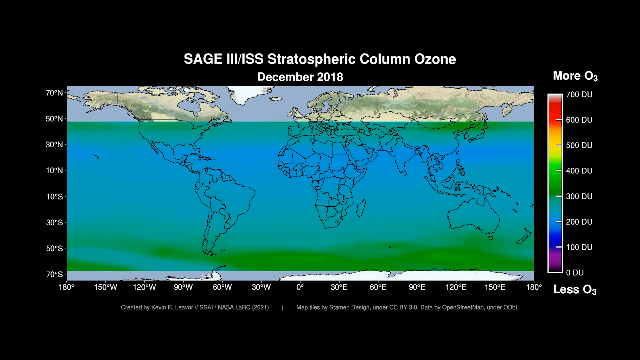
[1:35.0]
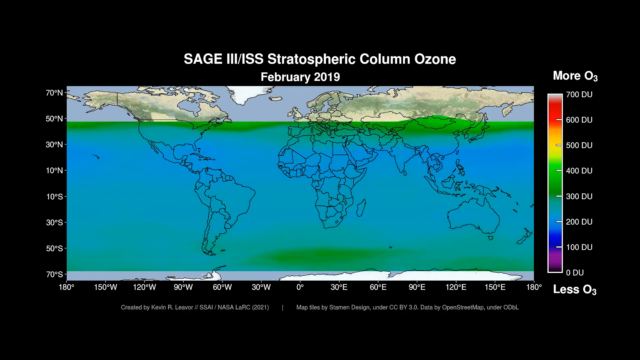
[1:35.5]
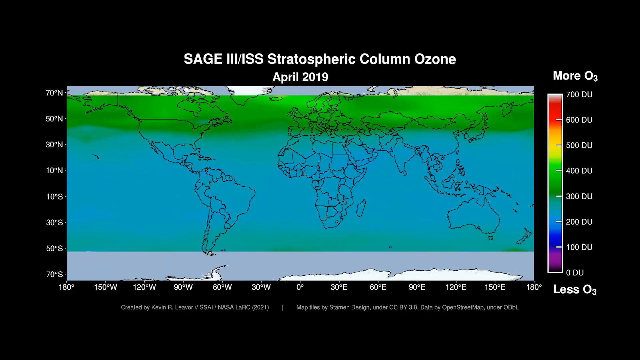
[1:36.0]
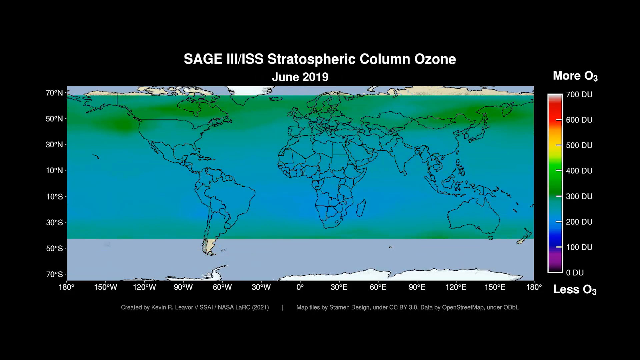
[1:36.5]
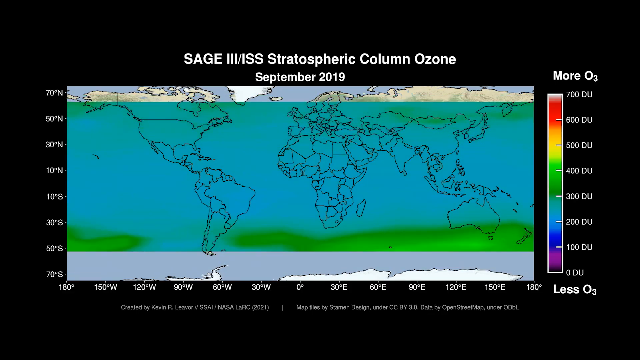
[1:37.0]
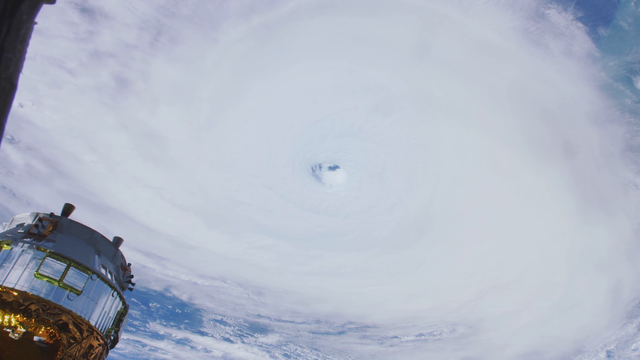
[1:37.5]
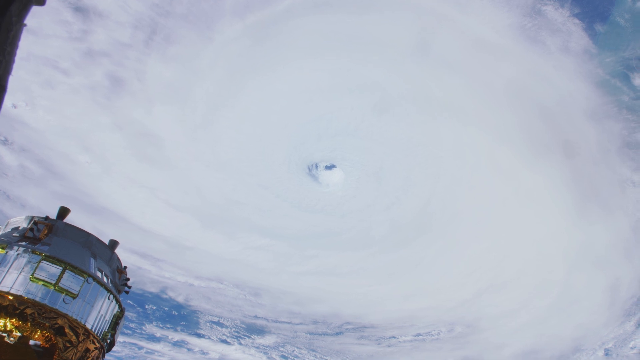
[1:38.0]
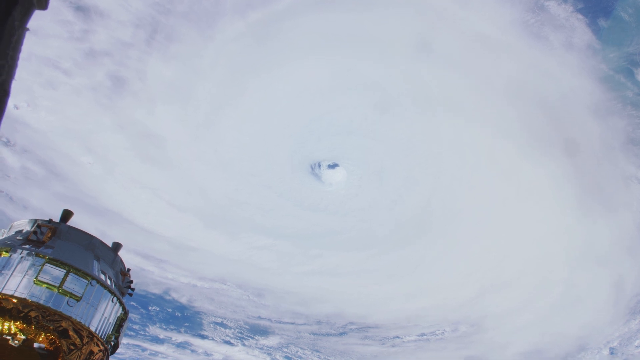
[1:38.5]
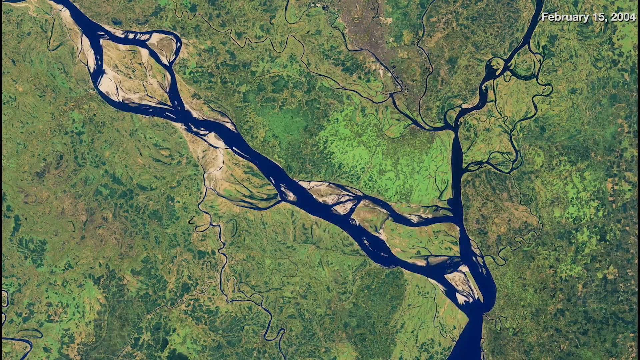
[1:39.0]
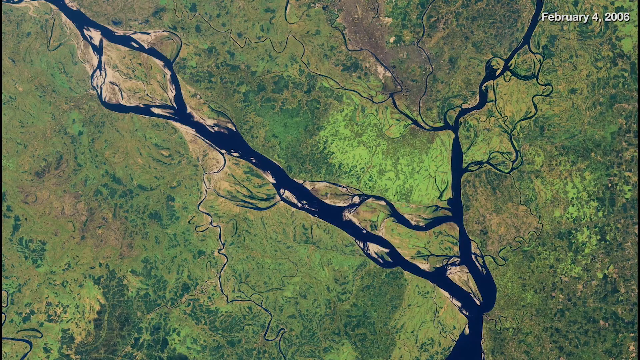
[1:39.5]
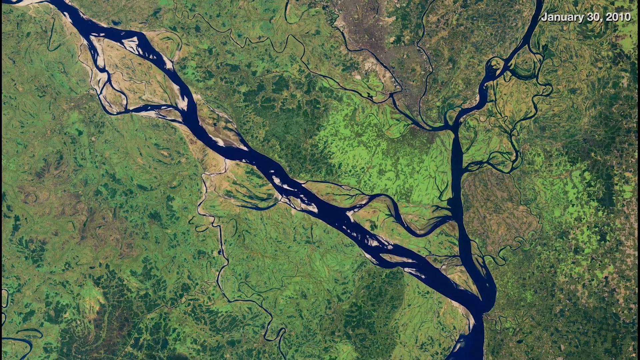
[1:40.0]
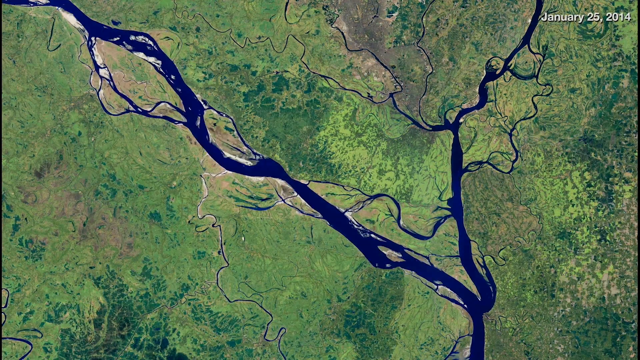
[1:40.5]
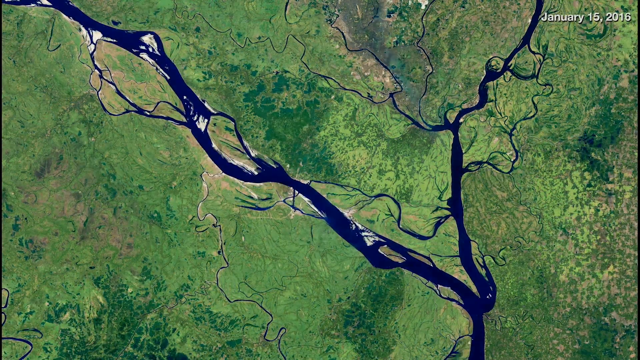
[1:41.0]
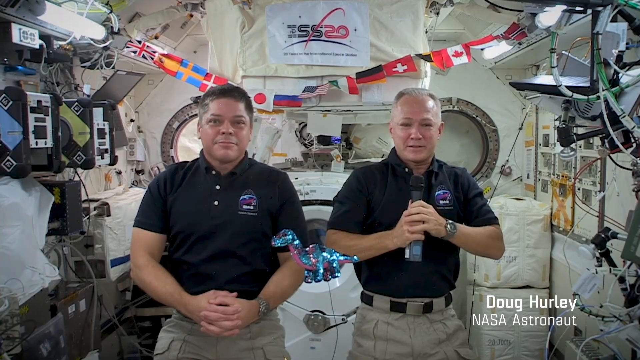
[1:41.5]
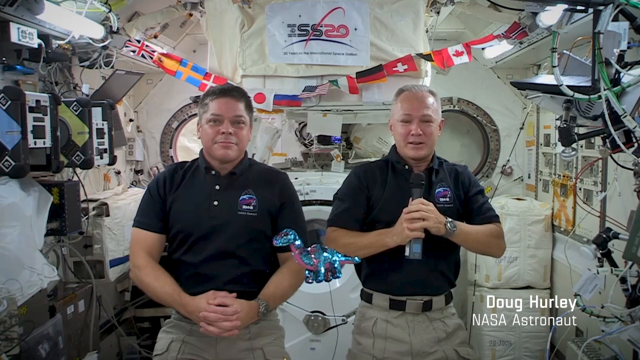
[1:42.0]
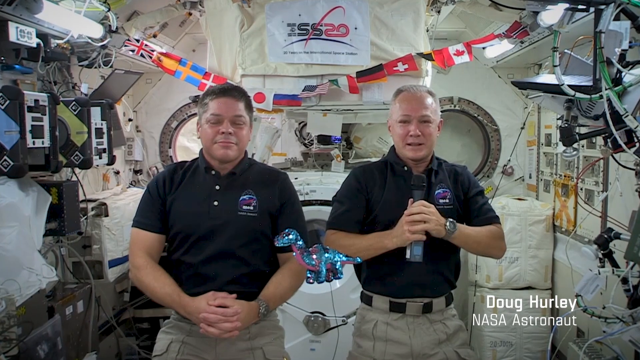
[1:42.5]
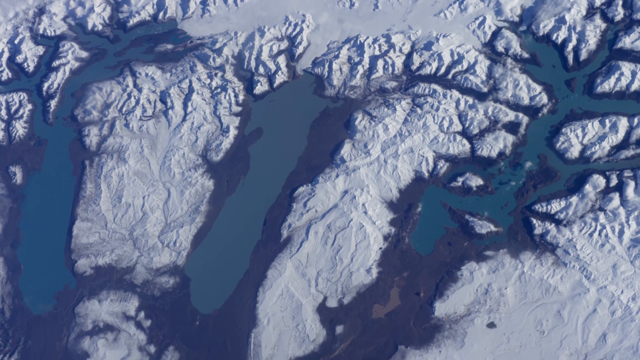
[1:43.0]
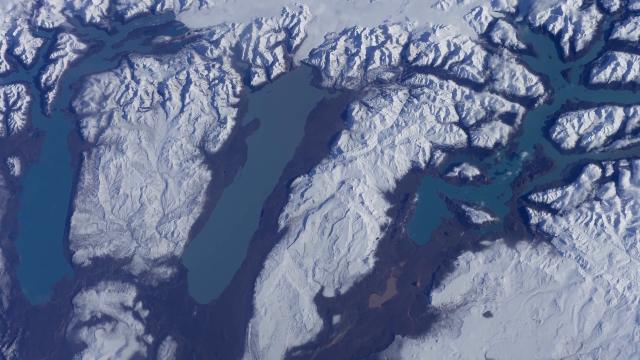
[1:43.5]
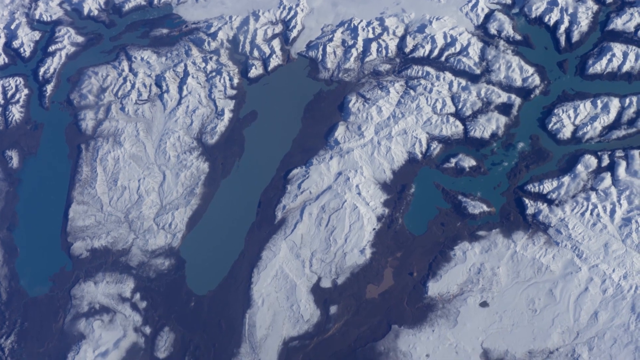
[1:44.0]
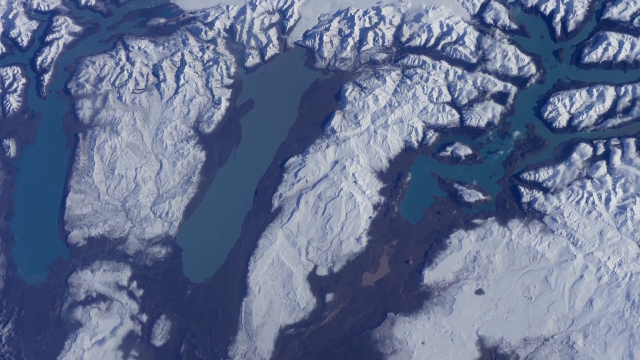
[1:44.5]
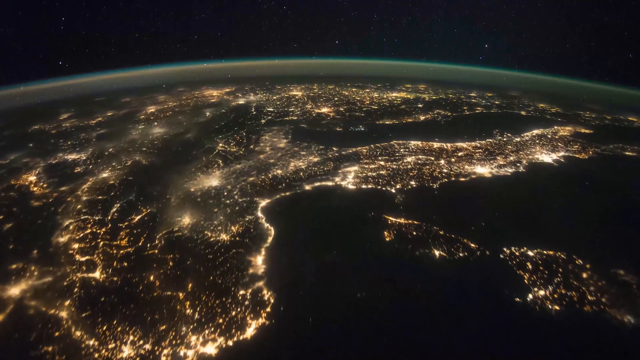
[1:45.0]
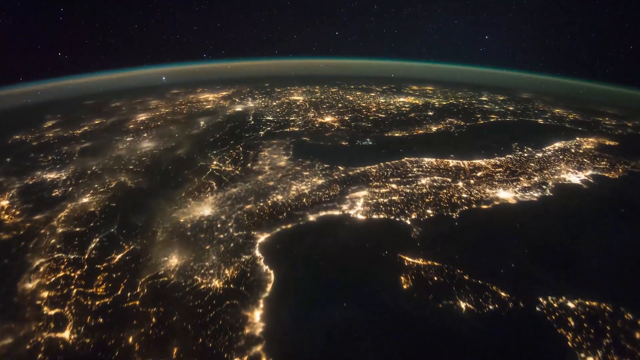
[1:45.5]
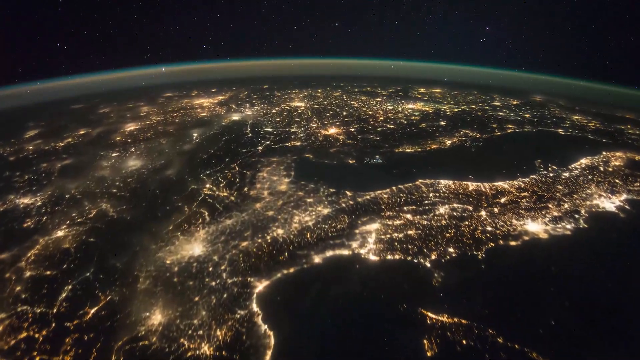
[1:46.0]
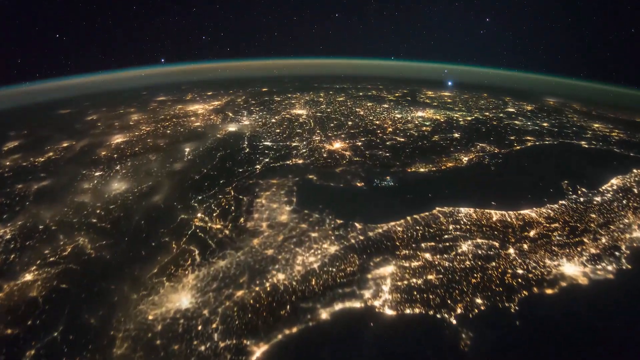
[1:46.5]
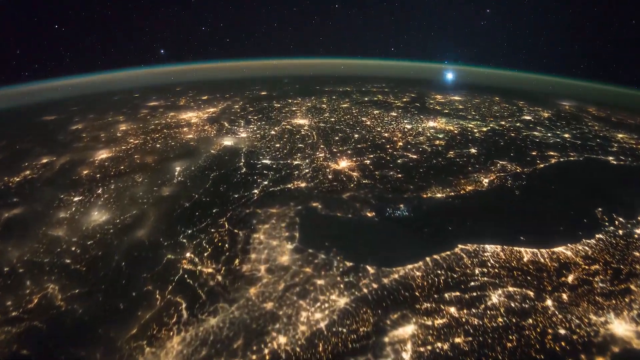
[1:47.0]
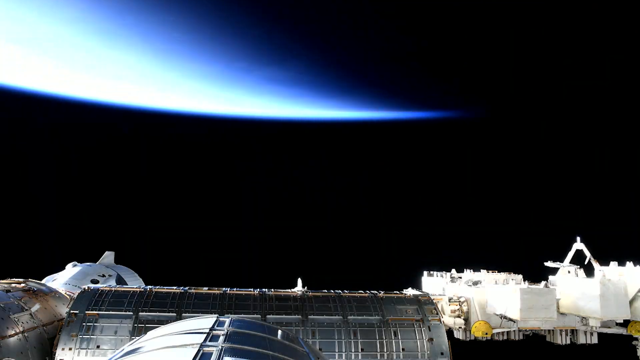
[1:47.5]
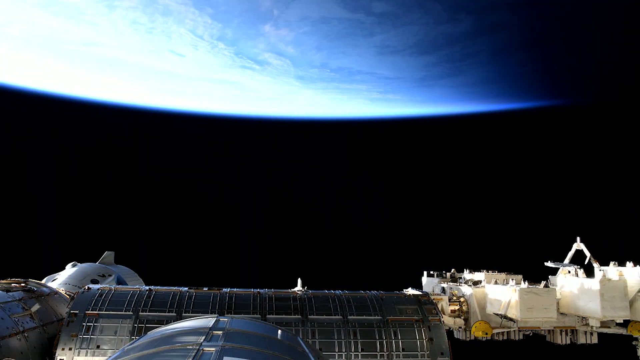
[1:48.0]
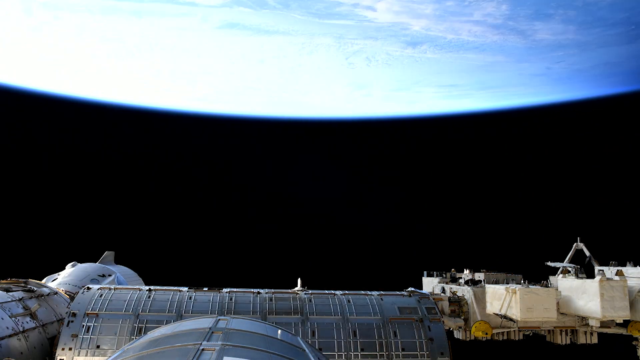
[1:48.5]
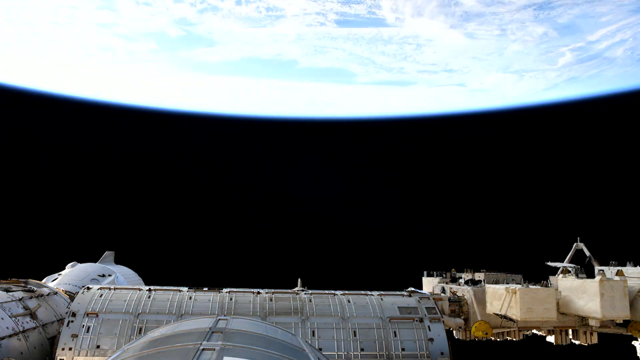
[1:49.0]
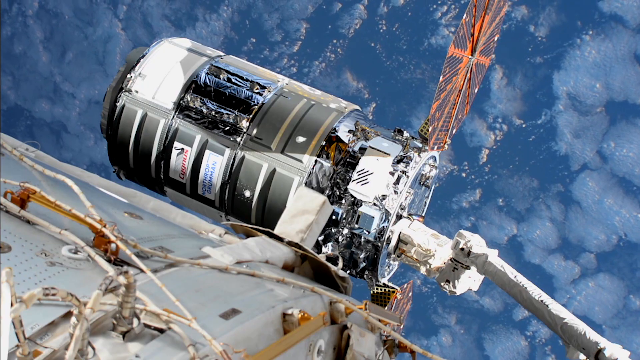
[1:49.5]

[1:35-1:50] A screen shows data from the International Space Station reading "stratospheric column ozone, March 2019," with a color gradient showing ozone effects across the Earth; it shifts through various months. The video then moves to a top-down view of clouds seen from the space station, followed by satellite-style imagery of rivers in an area on Earth. It transitions to two astronauts doing an interview over imagery of icy plains, and then bright lights on Earth lit up, seen from space.